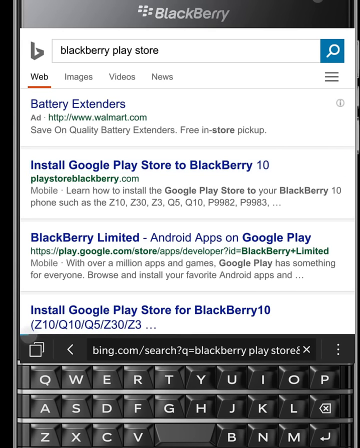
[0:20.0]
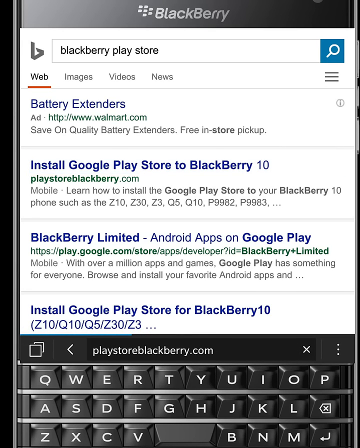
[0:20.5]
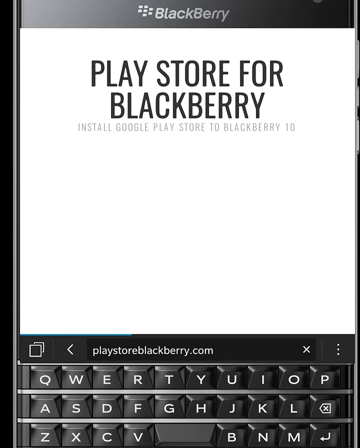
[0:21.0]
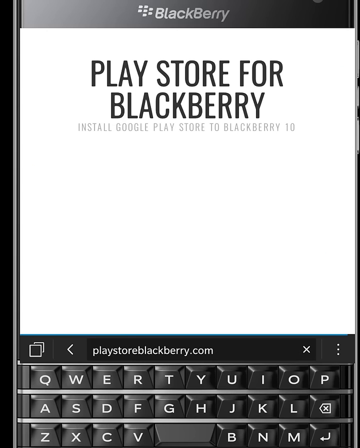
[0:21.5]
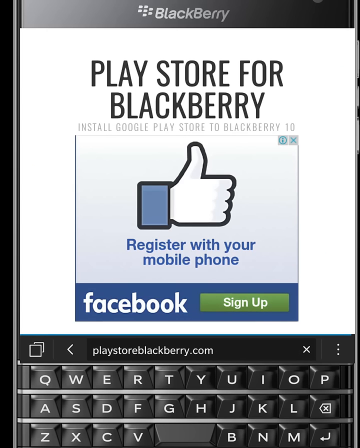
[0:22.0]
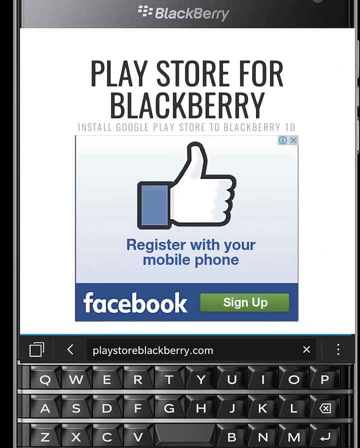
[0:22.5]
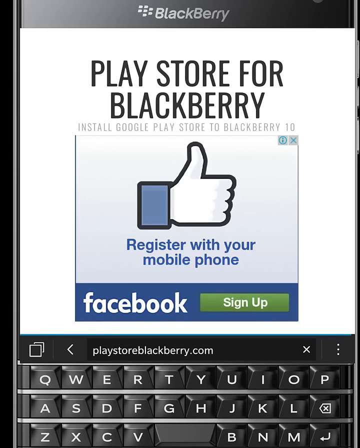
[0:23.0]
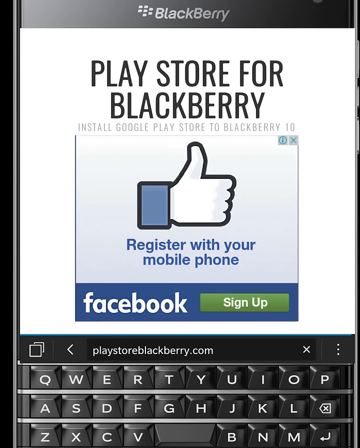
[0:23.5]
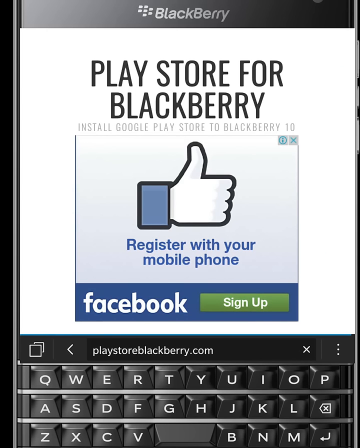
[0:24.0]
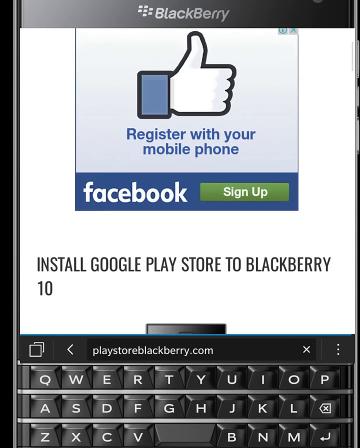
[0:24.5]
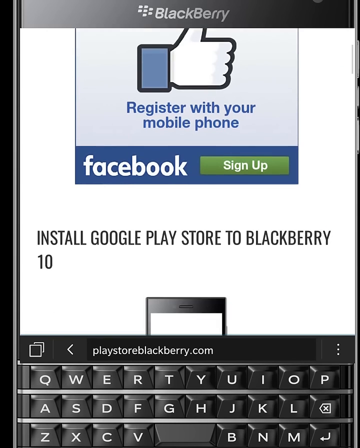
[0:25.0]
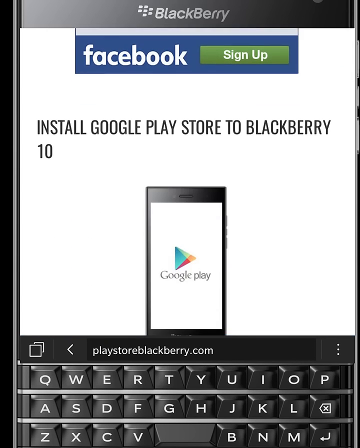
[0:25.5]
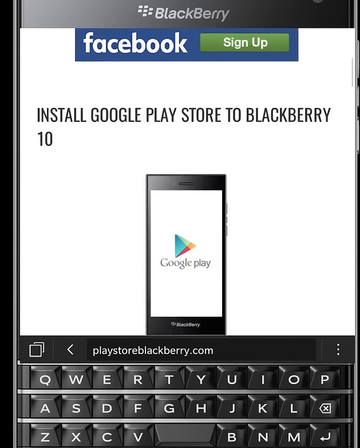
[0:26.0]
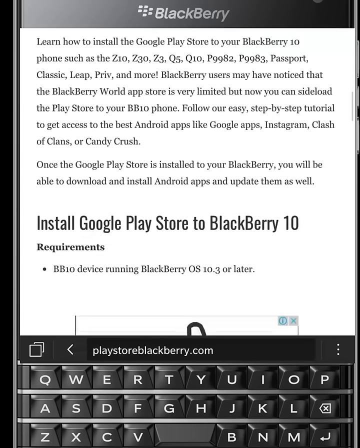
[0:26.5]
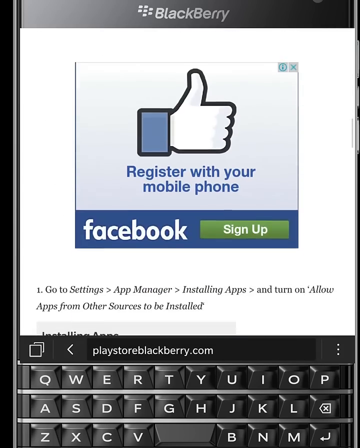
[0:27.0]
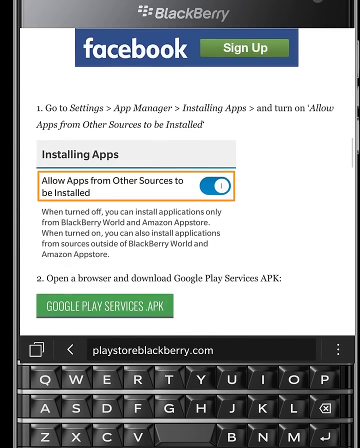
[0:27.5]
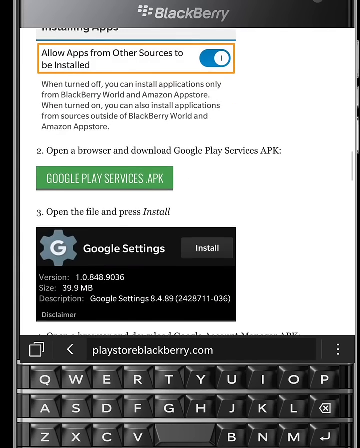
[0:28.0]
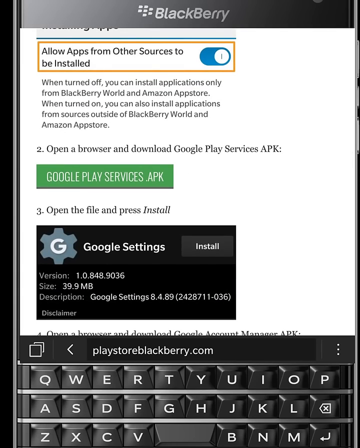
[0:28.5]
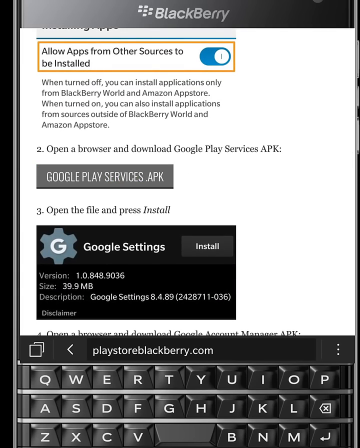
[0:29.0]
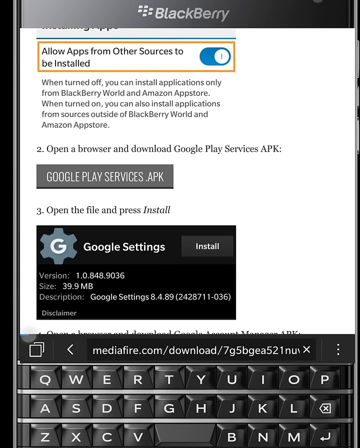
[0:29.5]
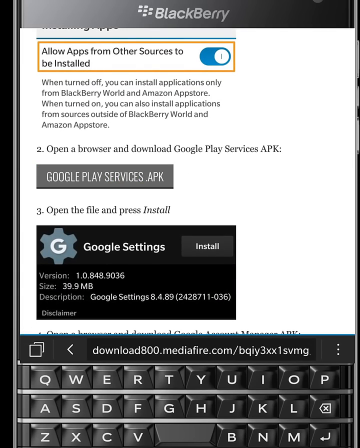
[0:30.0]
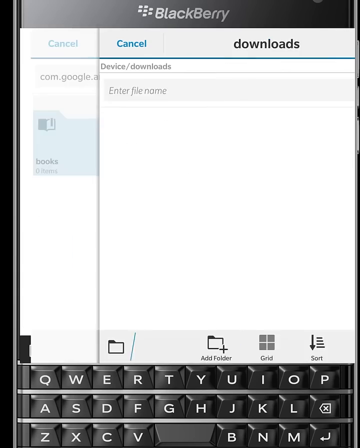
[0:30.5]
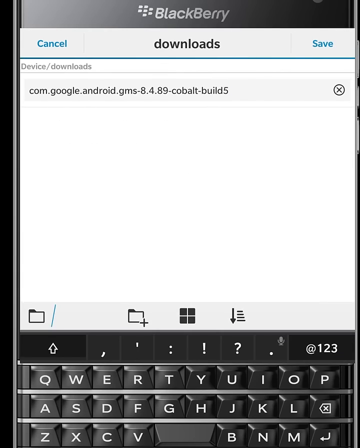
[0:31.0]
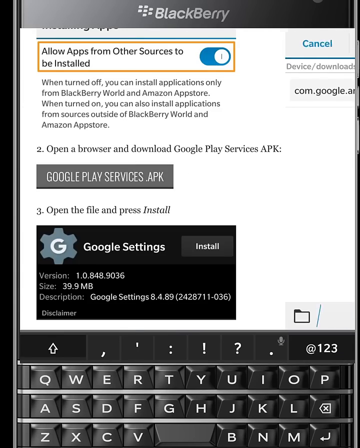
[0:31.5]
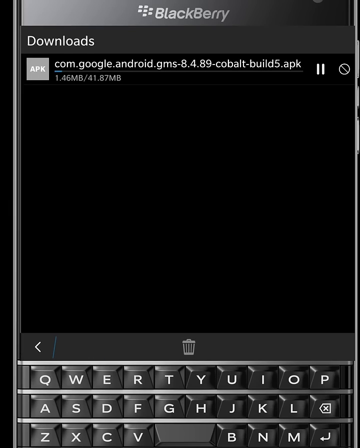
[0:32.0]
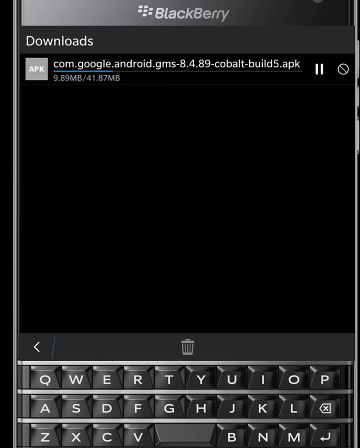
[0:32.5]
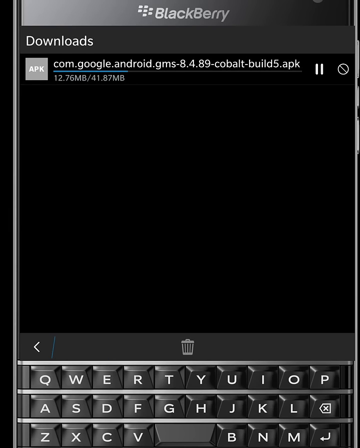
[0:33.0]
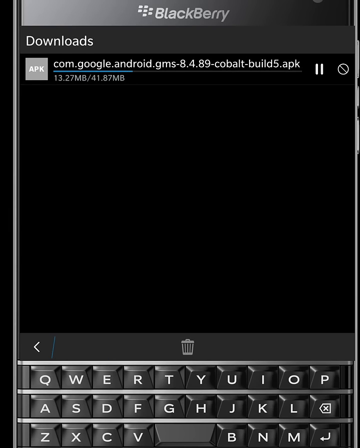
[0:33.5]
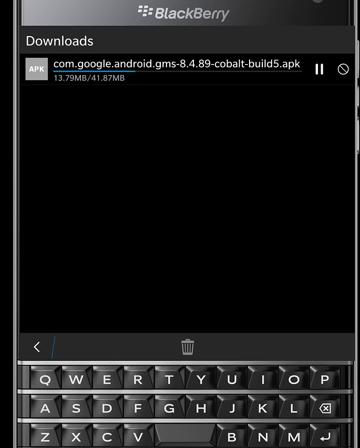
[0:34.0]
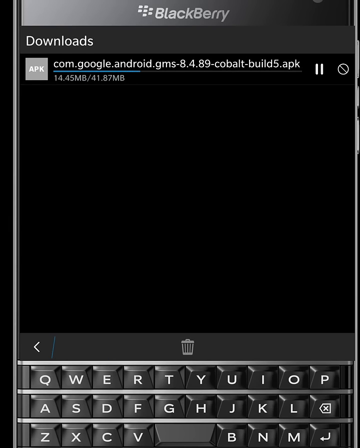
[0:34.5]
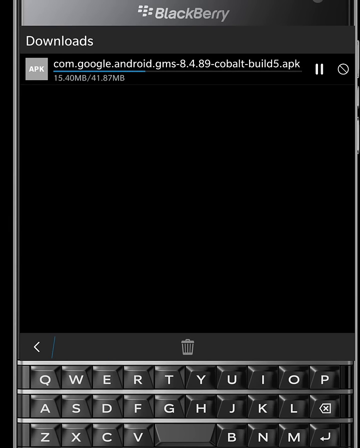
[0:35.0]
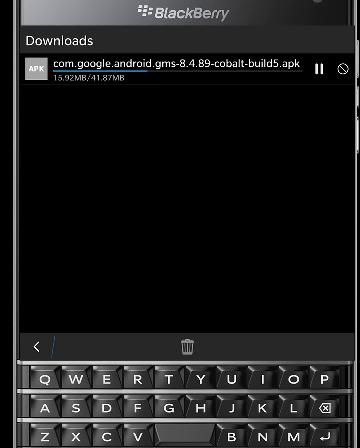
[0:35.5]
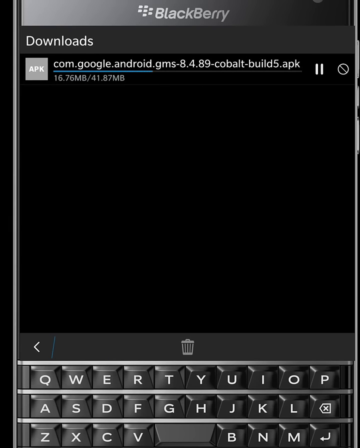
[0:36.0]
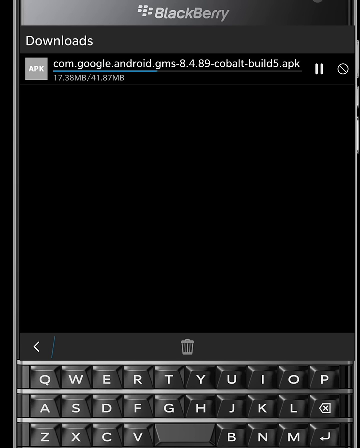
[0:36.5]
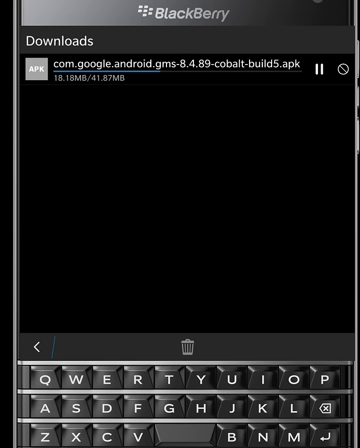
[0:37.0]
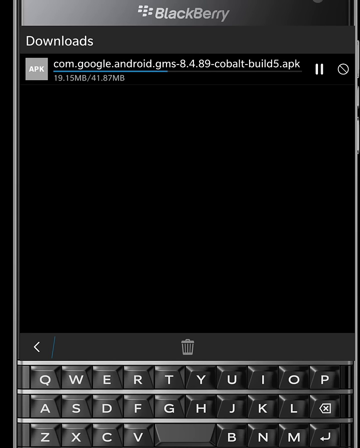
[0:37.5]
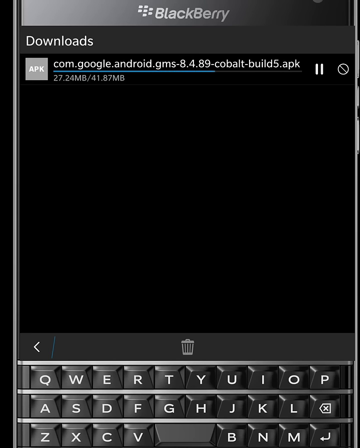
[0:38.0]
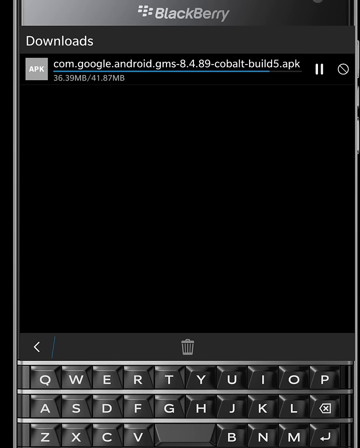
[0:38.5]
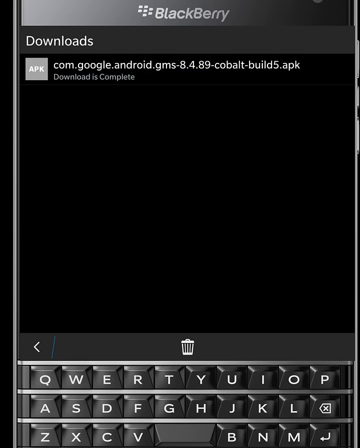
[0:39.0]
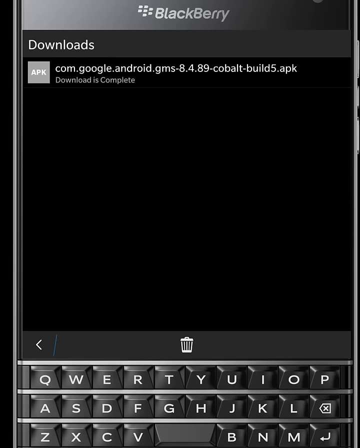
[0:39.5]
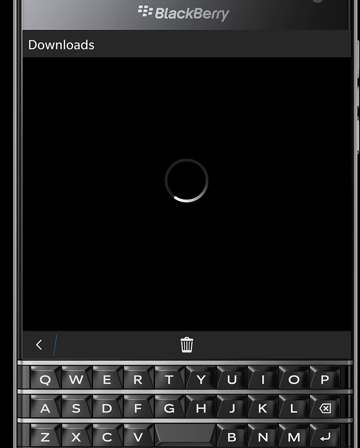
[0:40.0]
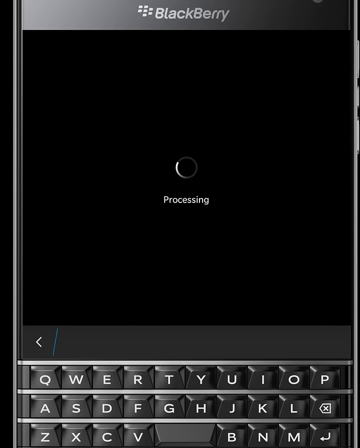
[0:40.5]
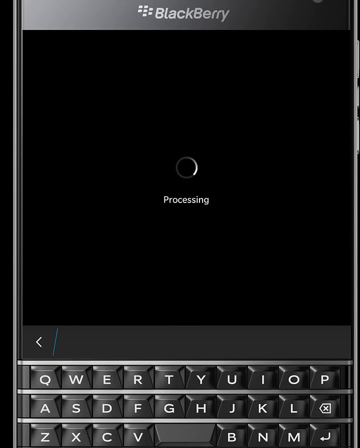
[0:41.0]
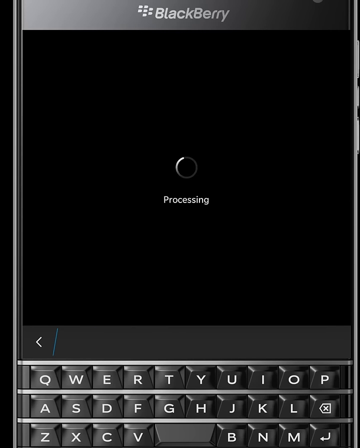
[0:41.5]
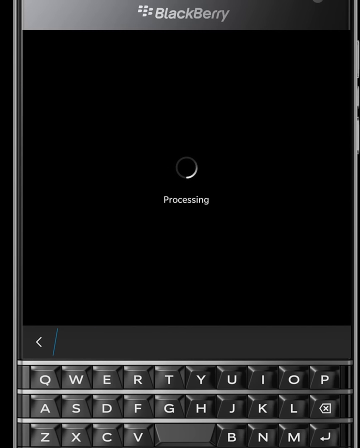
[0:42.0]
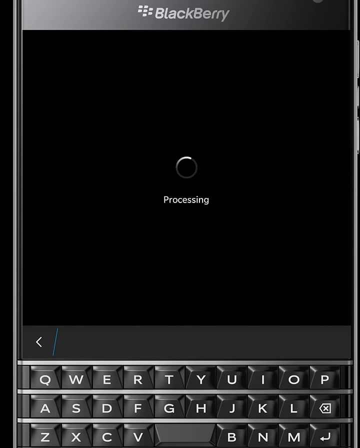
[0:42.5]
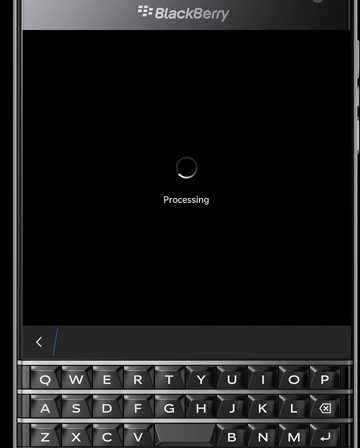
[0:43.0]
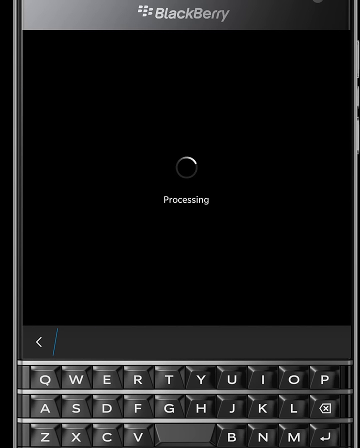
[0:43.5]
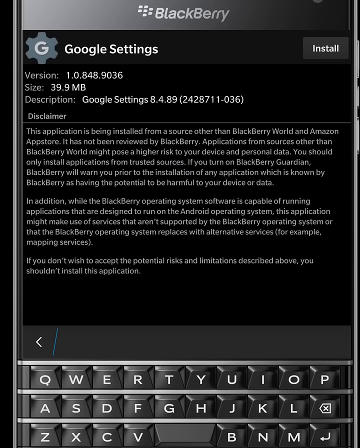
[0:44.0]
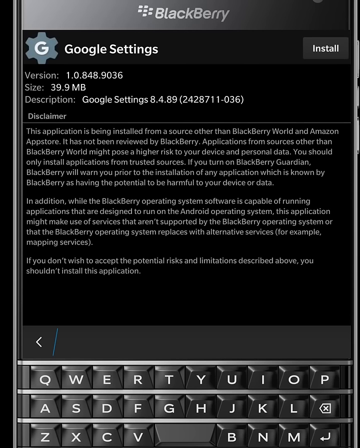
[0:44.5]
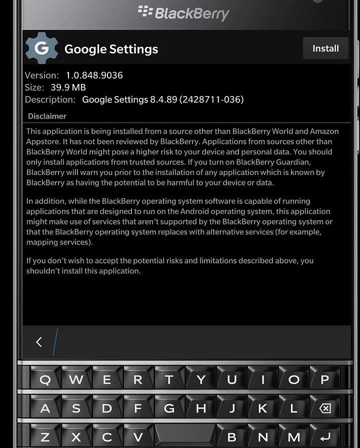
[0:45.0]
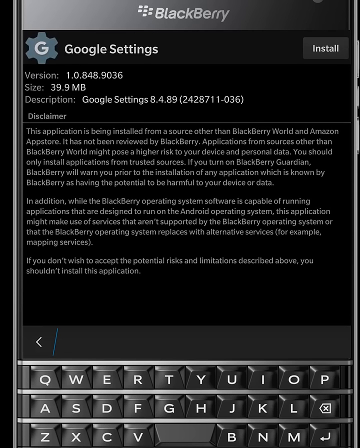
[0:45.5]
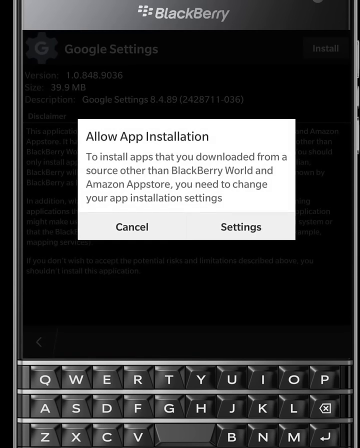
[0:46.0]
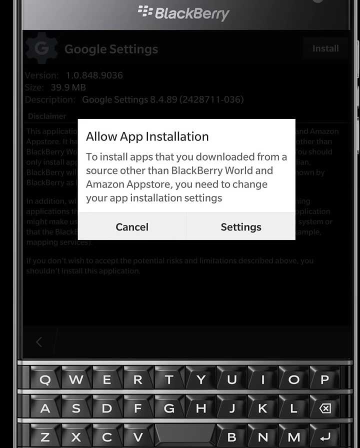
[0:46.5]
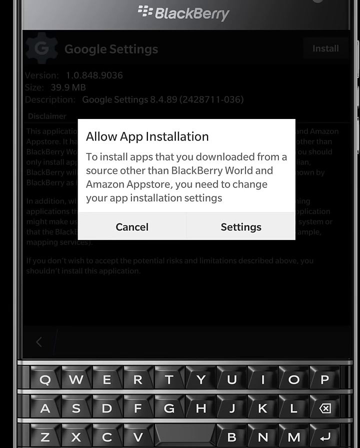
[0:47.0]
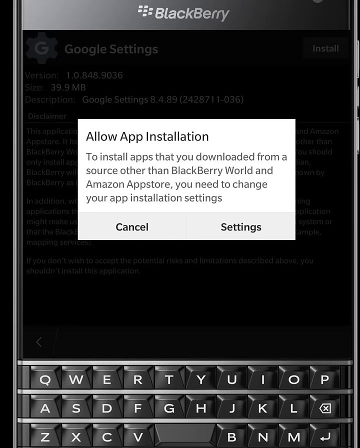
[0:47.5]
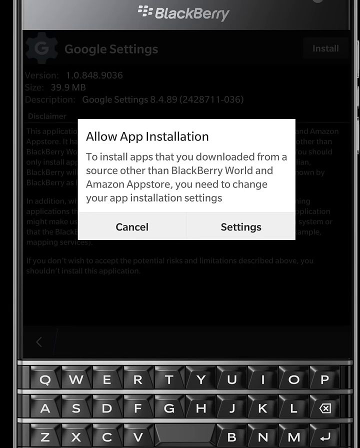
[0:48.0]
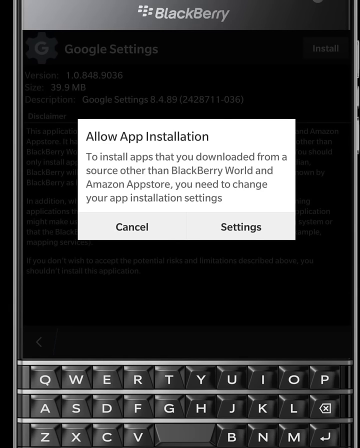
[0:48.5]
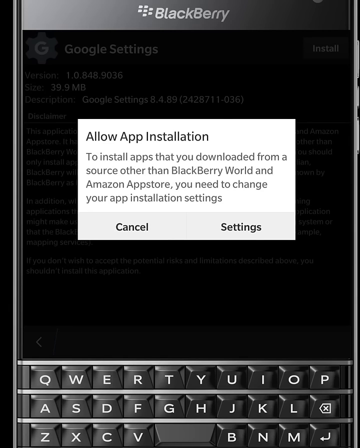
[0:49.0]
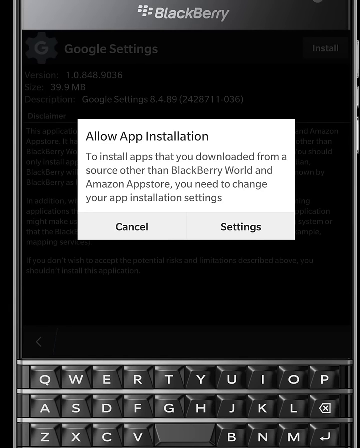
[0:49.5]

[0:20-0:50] The BlackBerry Play Store is accessed, and something related to Facebook appears. The user scrolls through and types something in. They look like they are trying to download something from Google Android, apparently to put Google Play on the phone. They go through the settings and allow app installation, and BlackBerry World appears. They seem to be in the process of getting this onto the phone, possibly for some kind of testing.